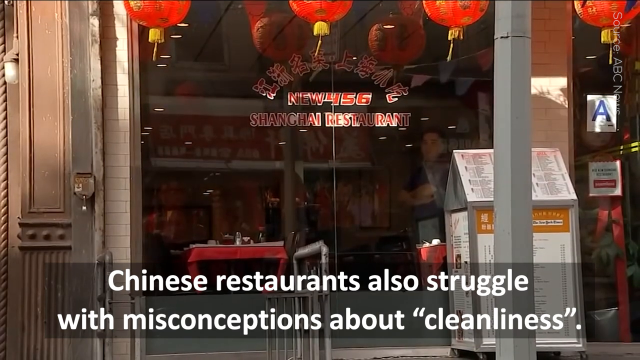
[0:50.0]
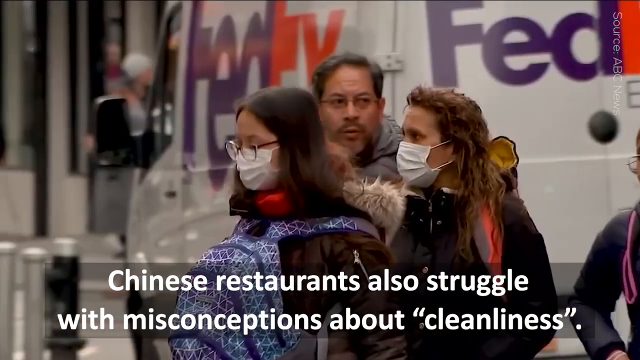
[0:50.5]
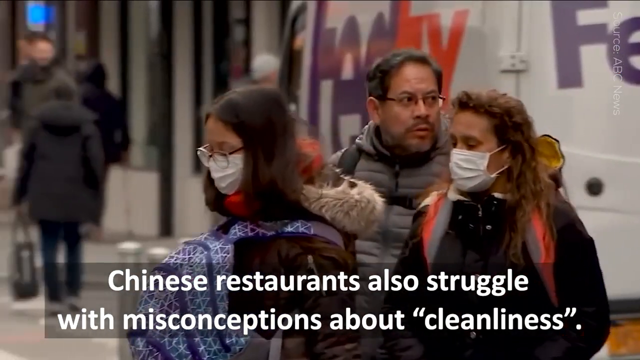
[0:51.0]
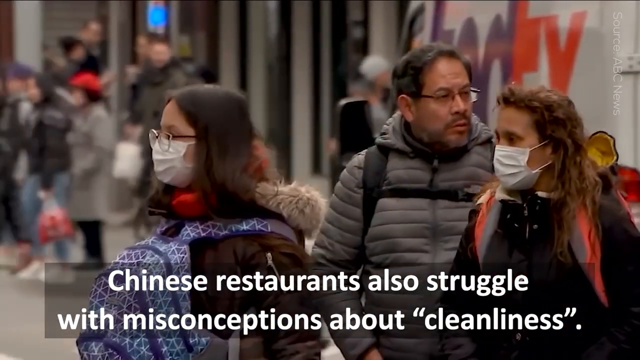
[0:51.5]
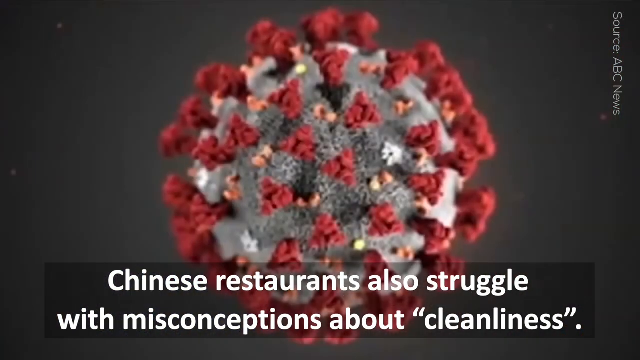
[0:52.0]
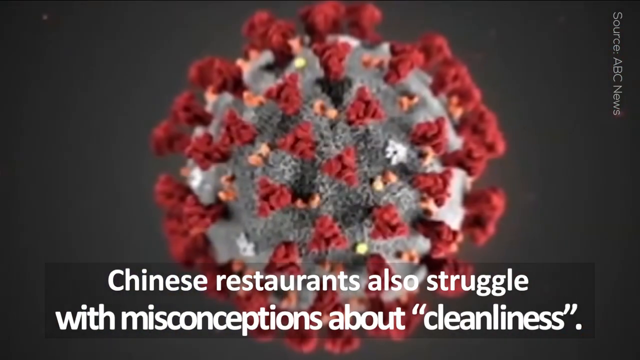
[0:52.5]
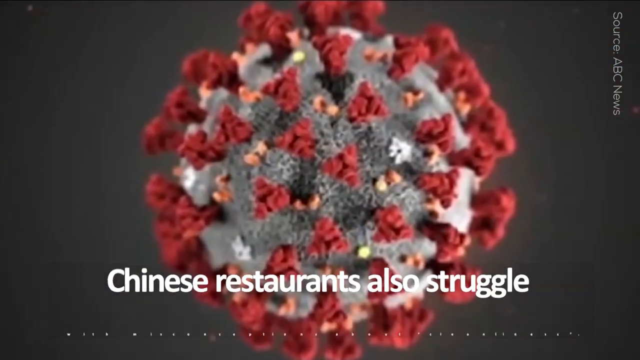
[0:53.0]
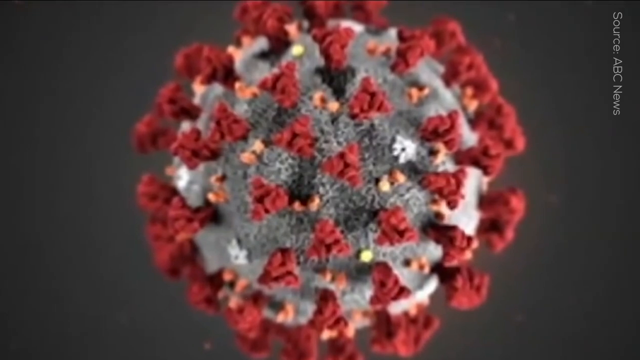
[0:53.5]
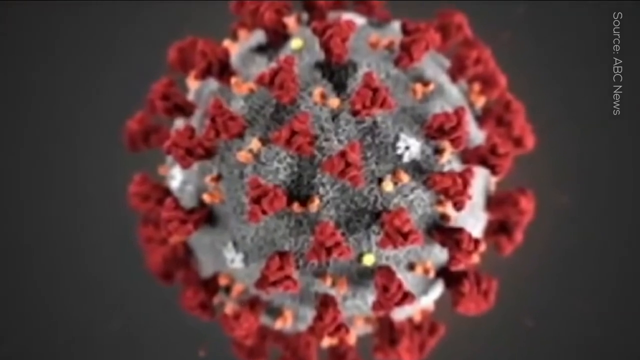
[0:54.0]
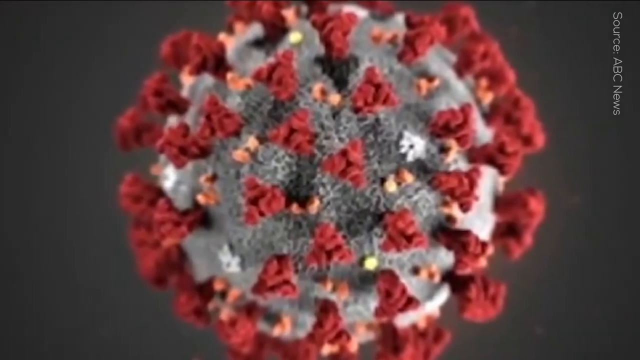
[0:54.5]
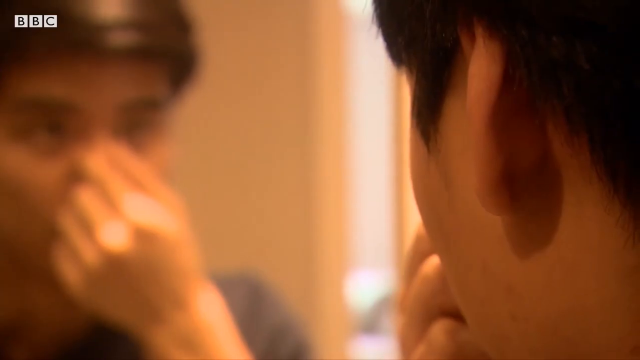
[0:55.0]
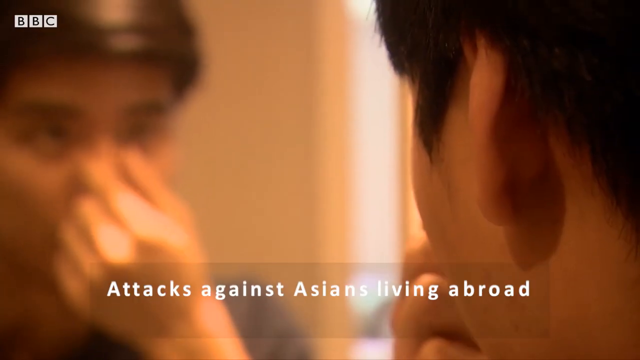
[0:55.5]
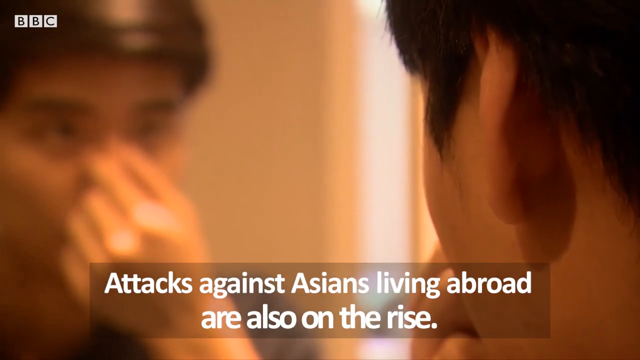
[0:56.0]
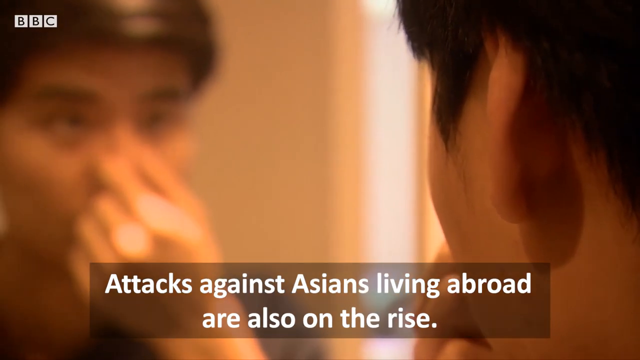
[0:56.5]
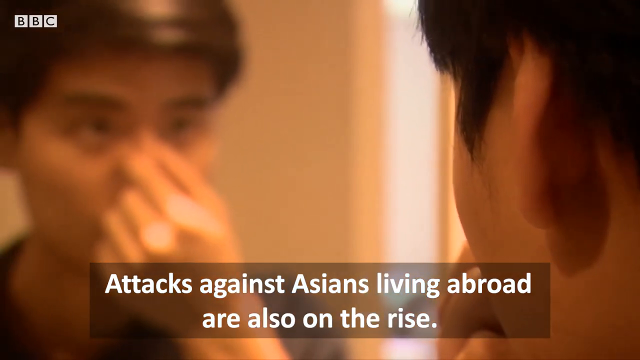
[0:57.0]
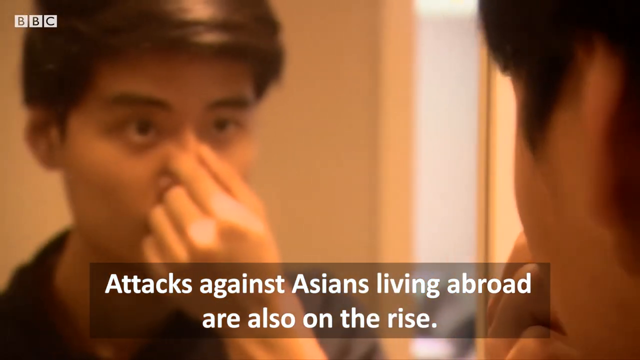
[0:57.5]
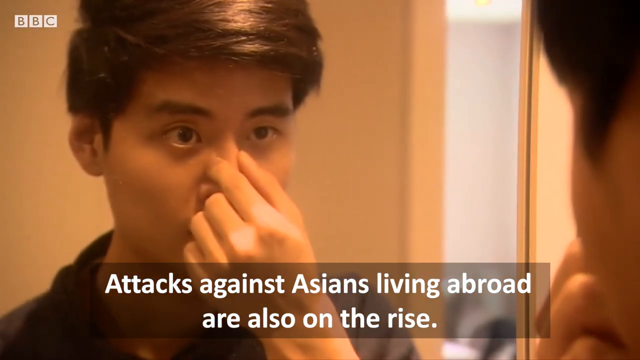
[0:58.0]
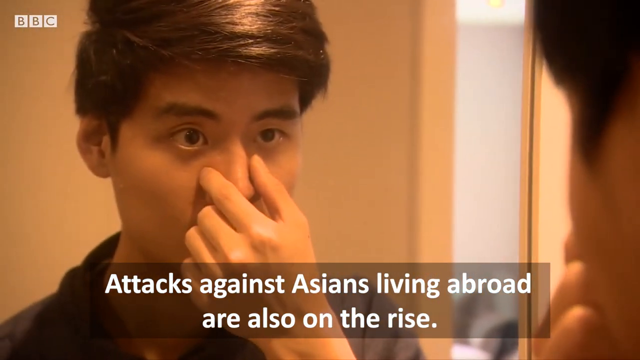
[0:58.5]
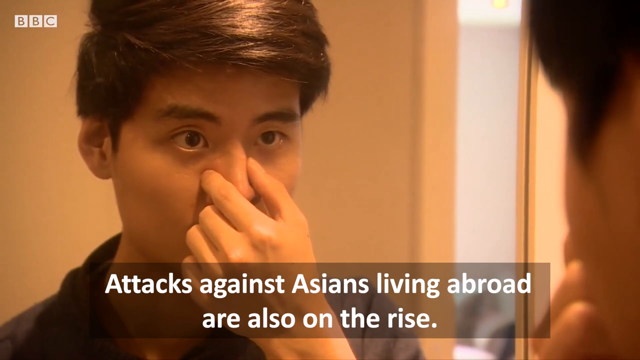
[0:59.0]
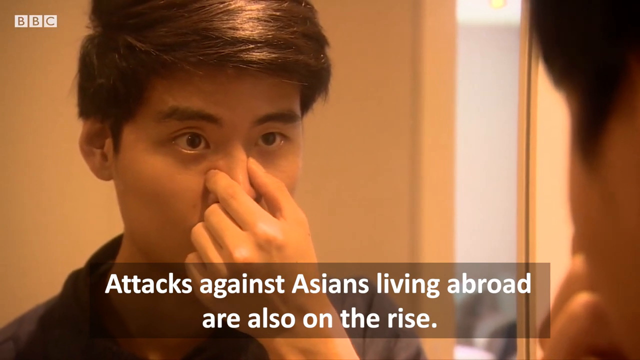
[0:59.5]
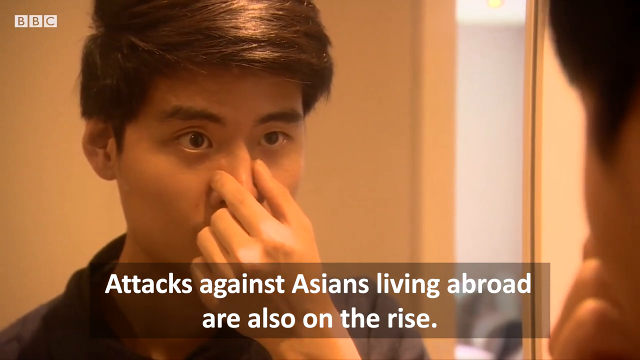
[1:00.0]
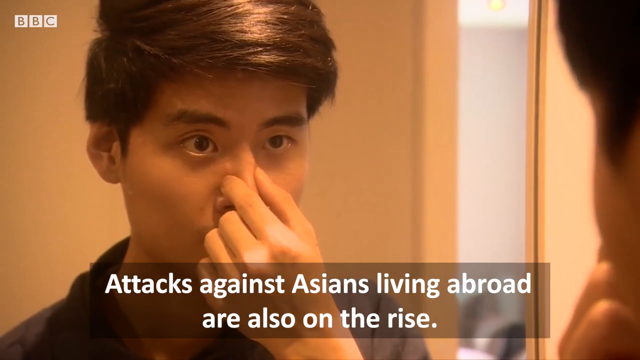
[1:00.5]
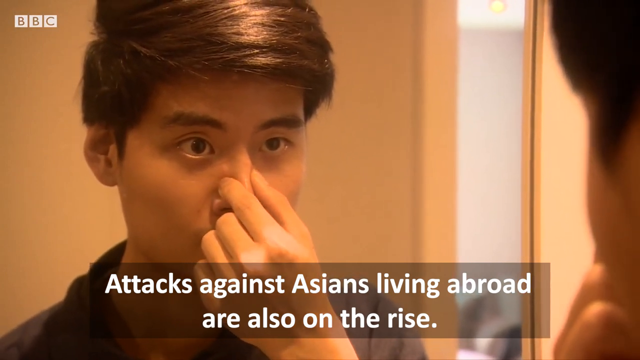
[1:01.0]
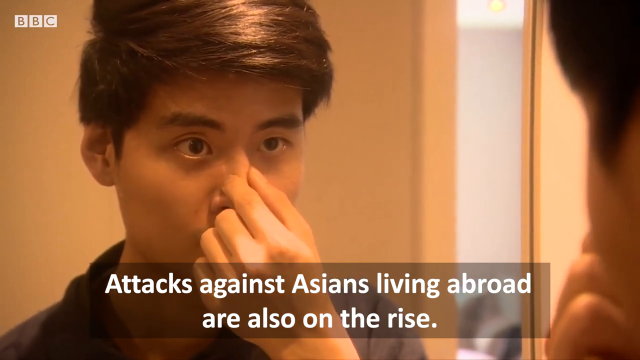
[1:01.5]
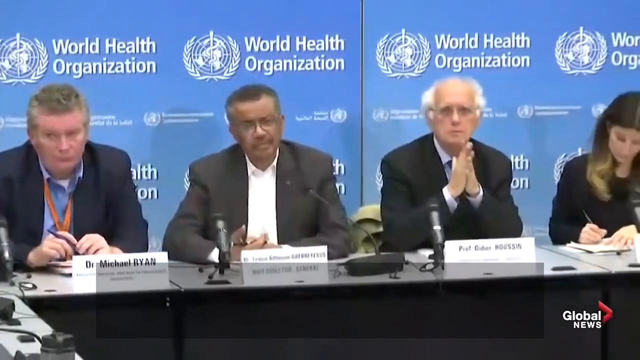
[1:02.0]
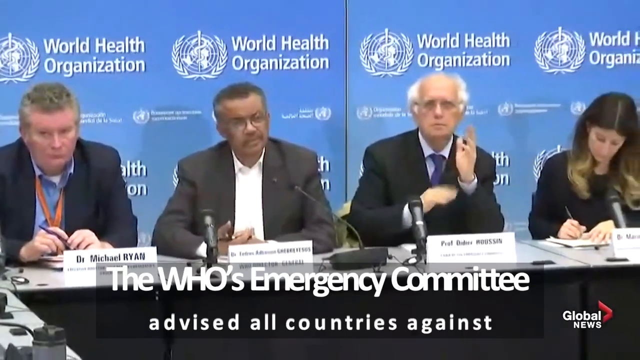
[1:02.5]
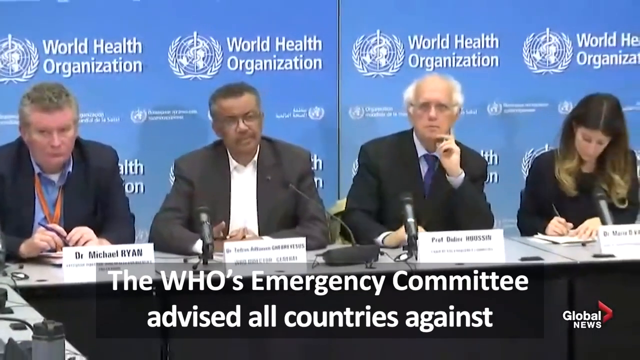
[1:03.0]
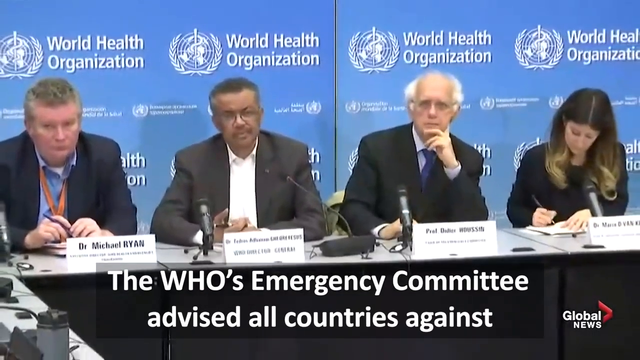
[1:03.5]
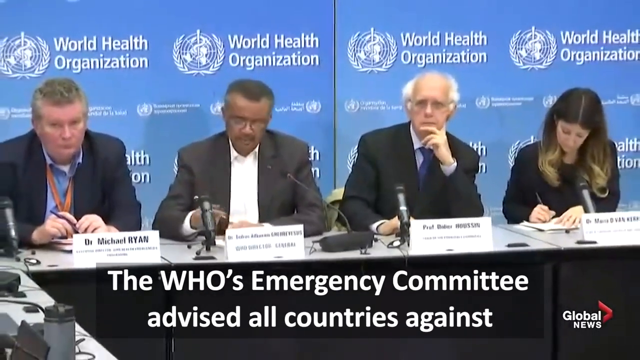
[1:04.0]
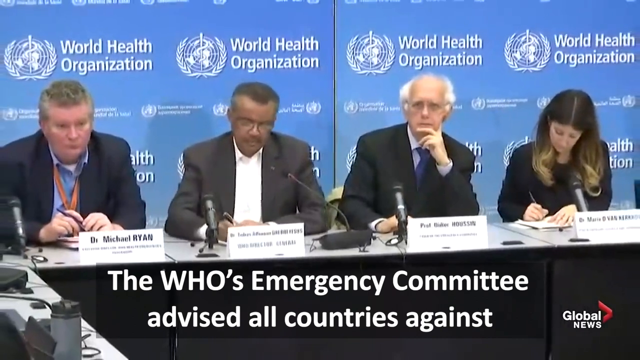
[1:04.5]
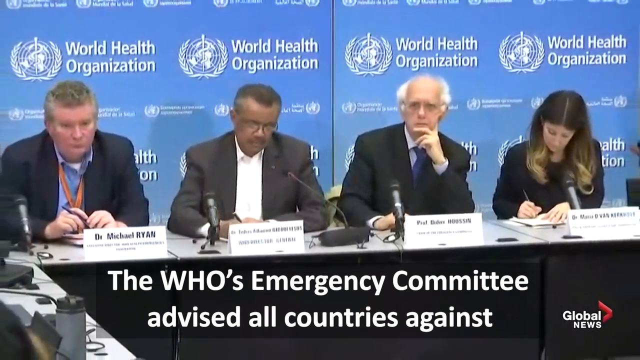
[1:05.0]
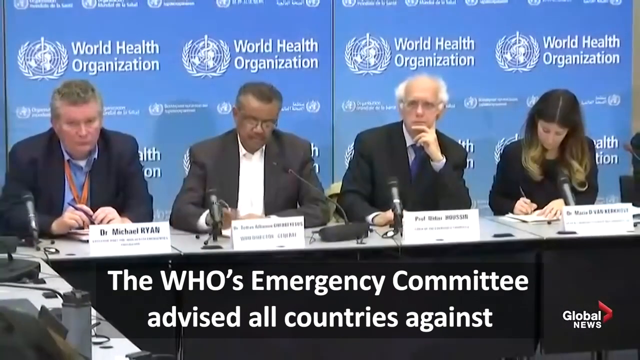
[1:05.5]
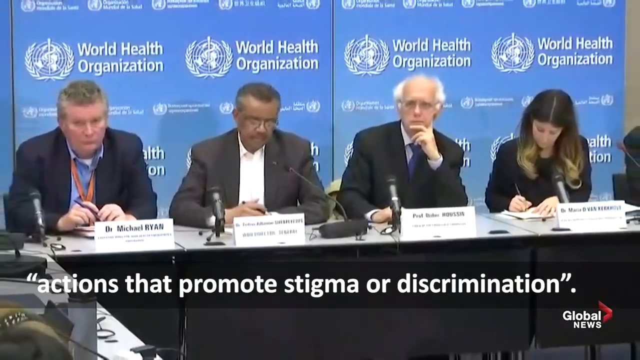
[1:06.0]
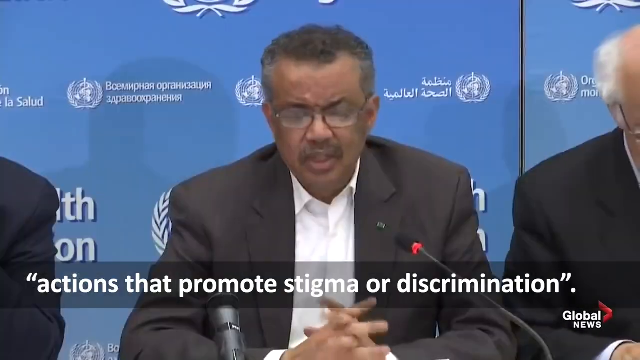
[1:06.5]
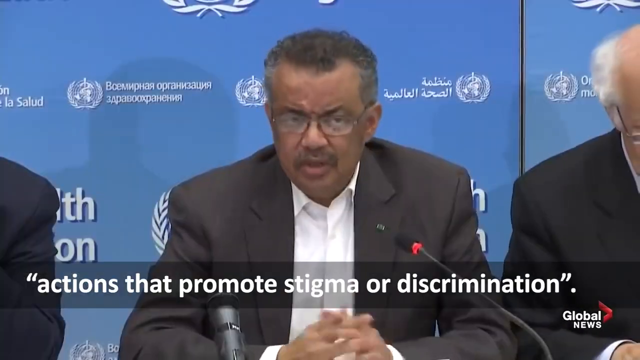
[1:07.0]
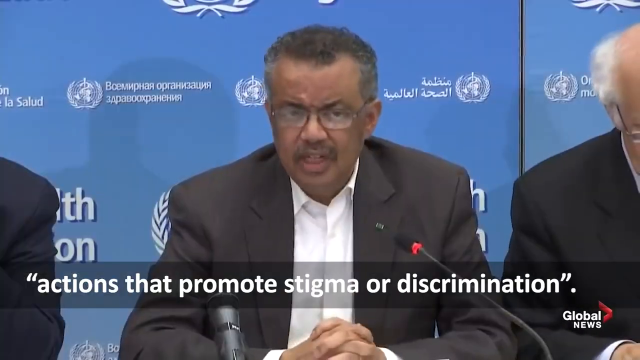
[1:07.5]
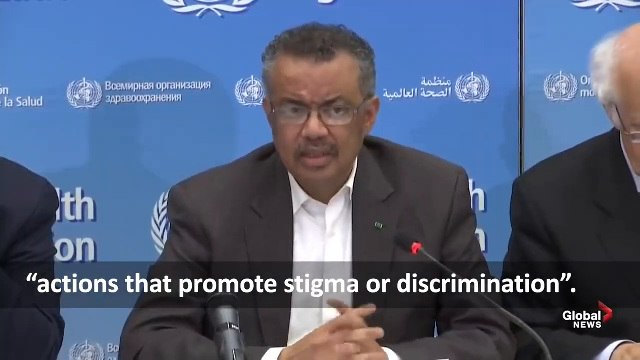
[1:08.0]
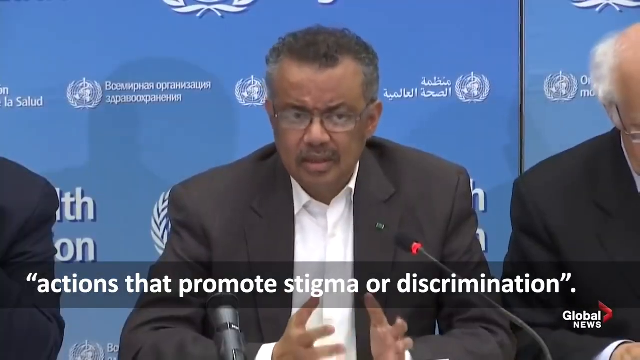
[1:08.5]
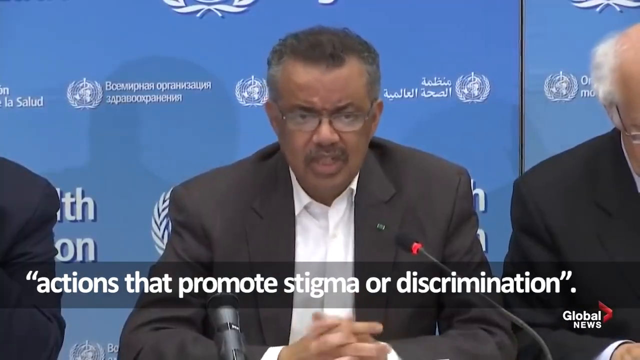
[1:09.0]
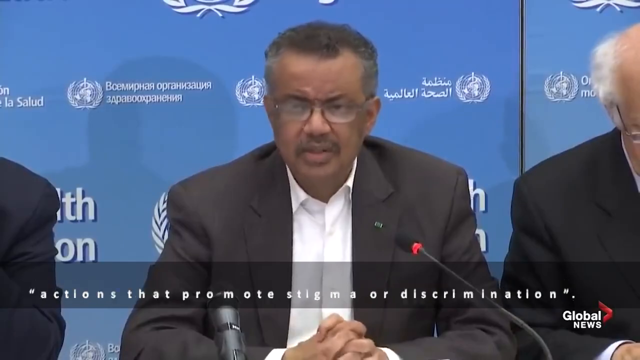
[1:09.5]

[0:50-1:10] Text states that attacks against Asians living abroad are also on the rise, shown with an Asian boy pinching his nose. A World Health Organization meeting follows, where four individuals seem to be writing something down while listening to a presentation by someone. WHO text mentions actions that promote stigma or discrimination. A man continues to talk, with a red and black microphone and World Health Organization wallpaper in the background. East Asian people also appear, seemingly moving around with fear.